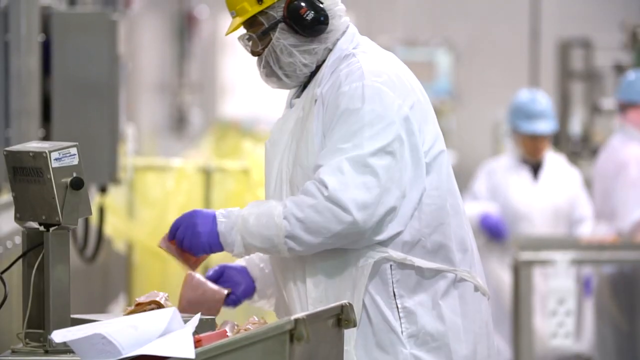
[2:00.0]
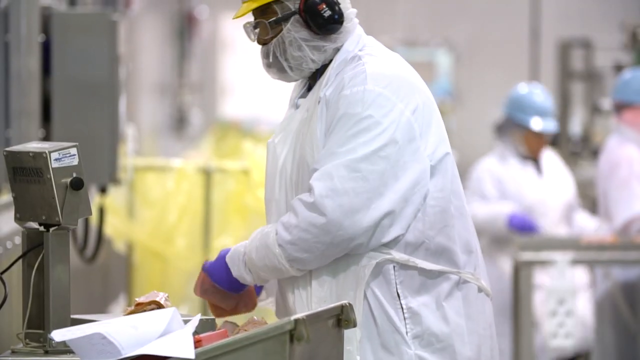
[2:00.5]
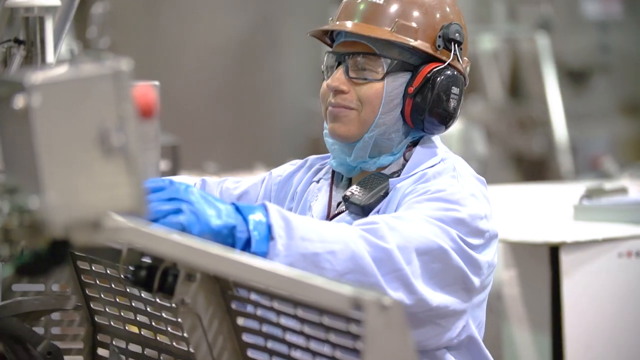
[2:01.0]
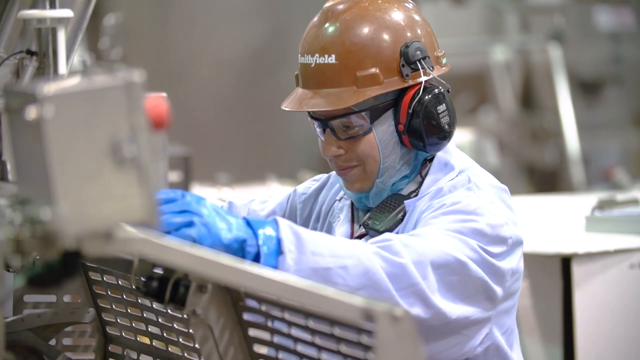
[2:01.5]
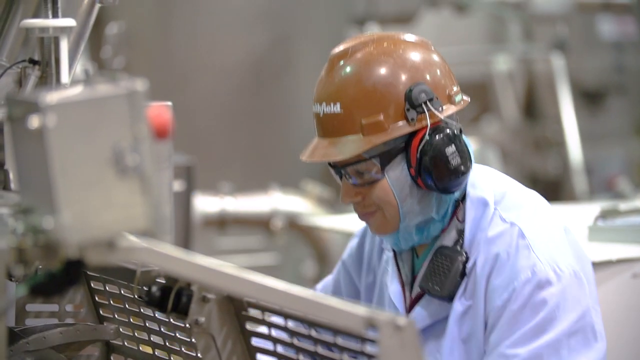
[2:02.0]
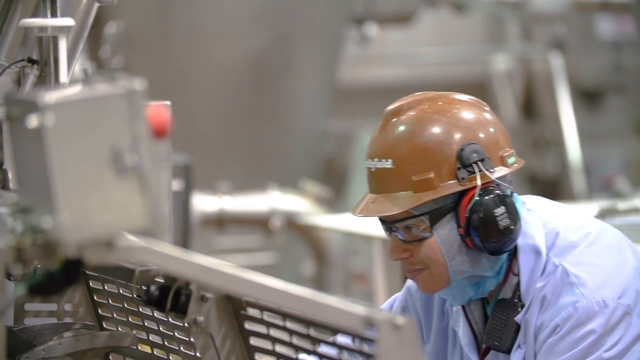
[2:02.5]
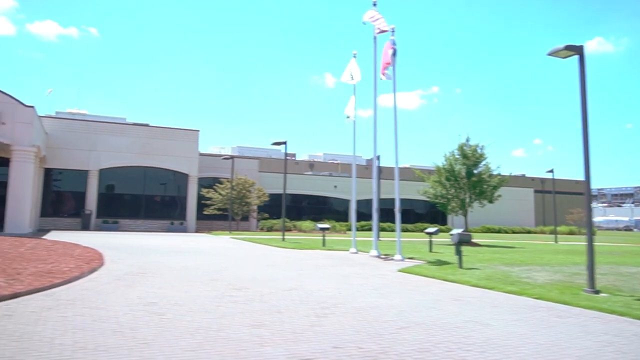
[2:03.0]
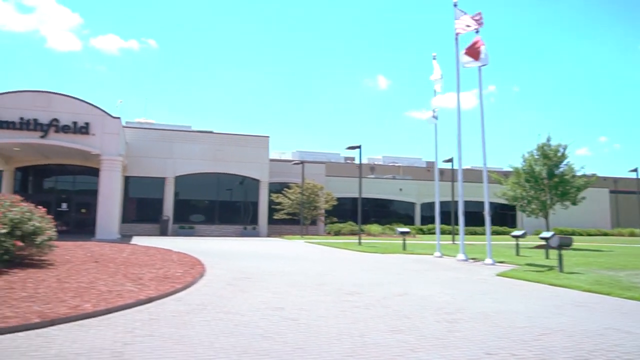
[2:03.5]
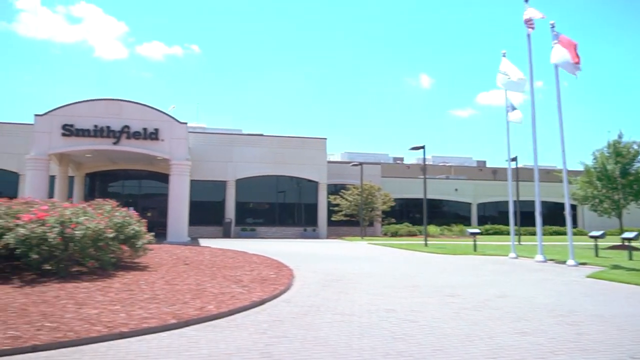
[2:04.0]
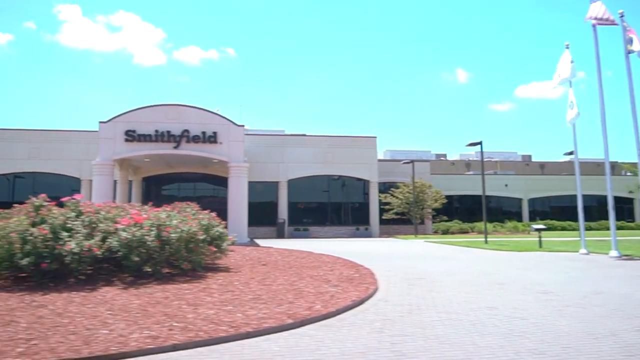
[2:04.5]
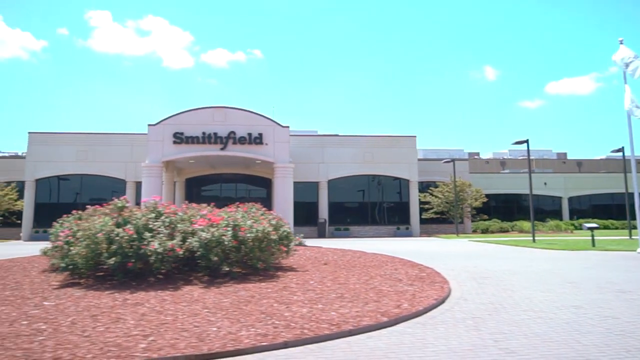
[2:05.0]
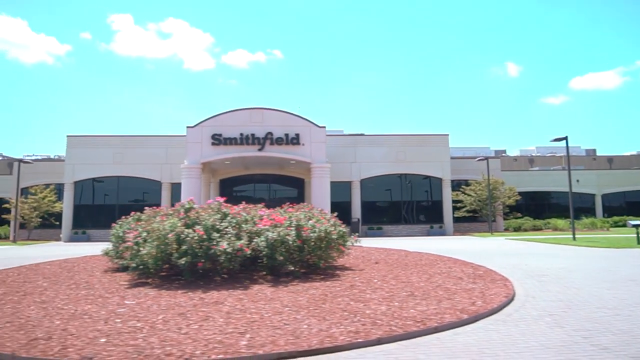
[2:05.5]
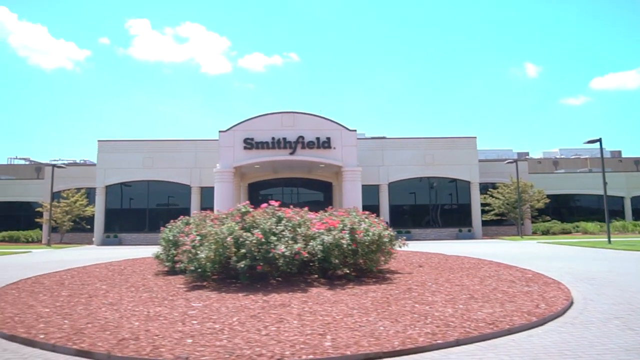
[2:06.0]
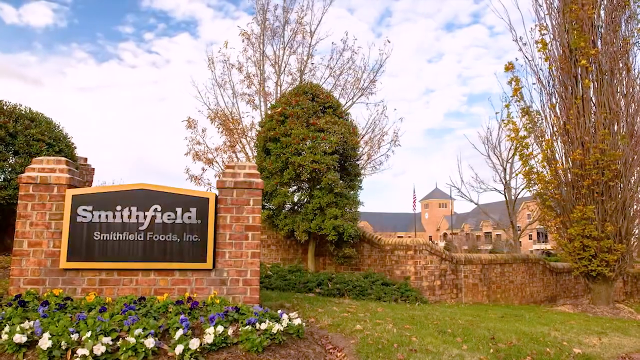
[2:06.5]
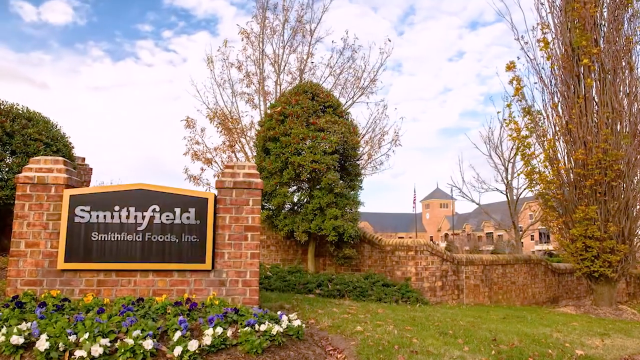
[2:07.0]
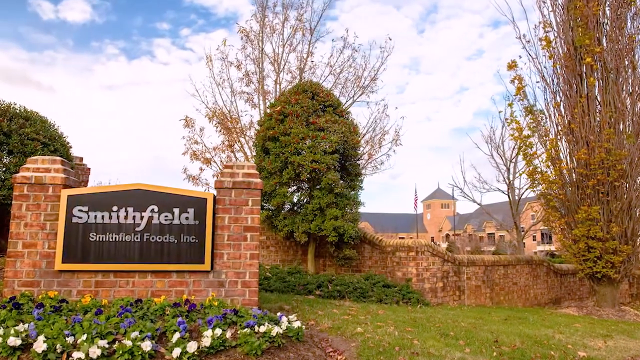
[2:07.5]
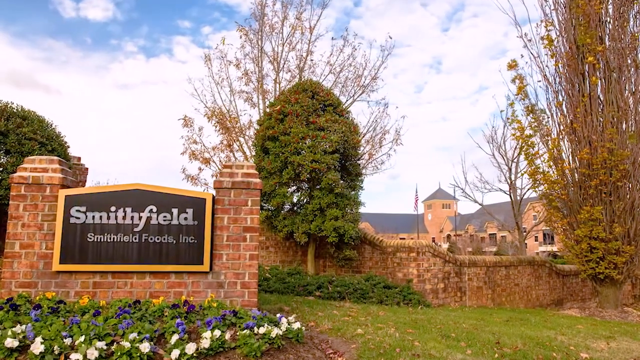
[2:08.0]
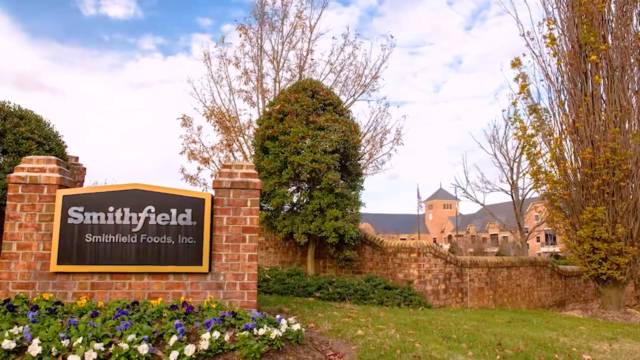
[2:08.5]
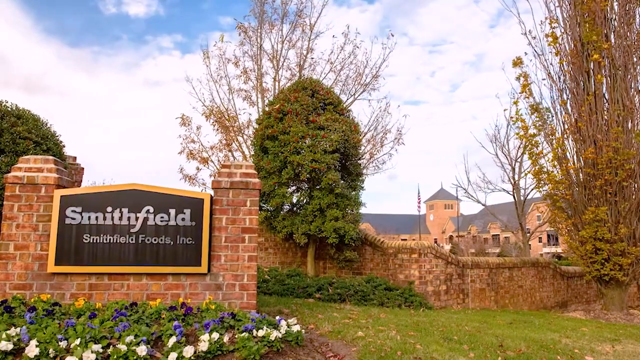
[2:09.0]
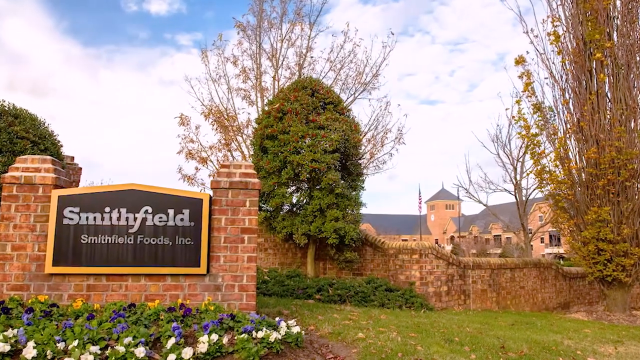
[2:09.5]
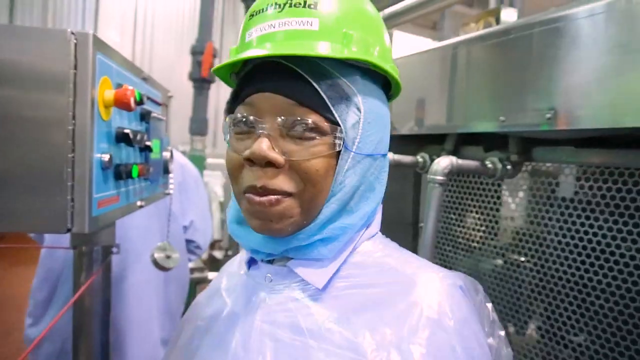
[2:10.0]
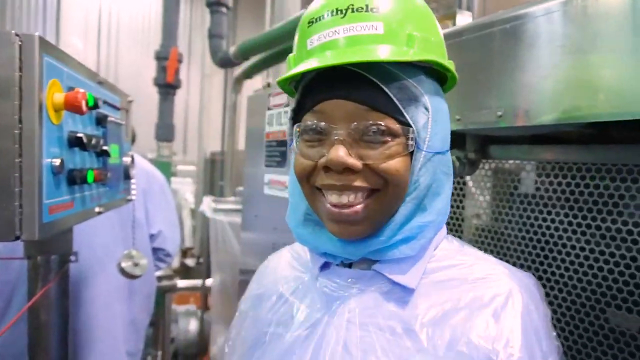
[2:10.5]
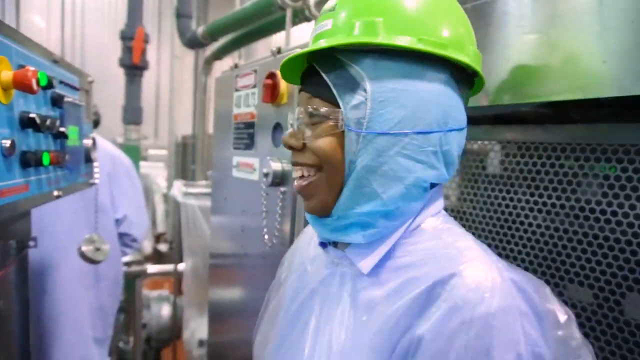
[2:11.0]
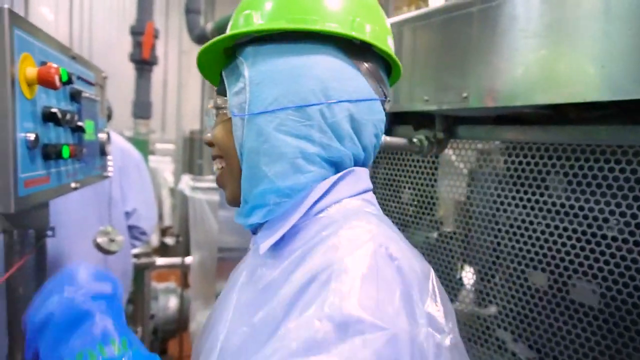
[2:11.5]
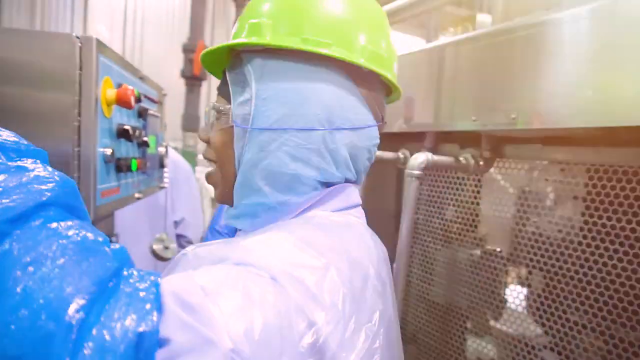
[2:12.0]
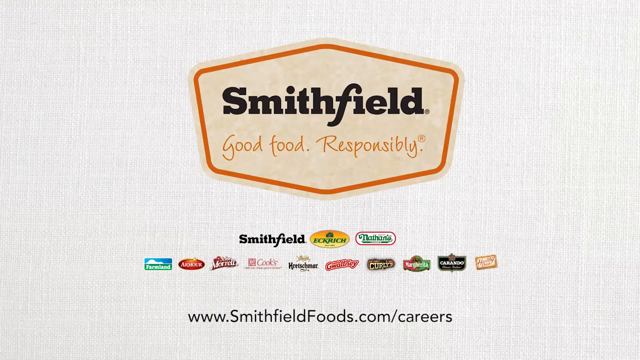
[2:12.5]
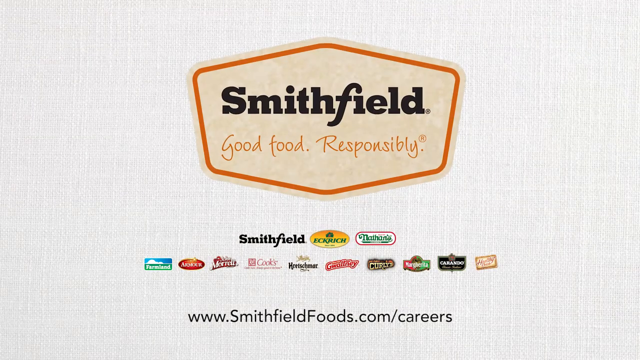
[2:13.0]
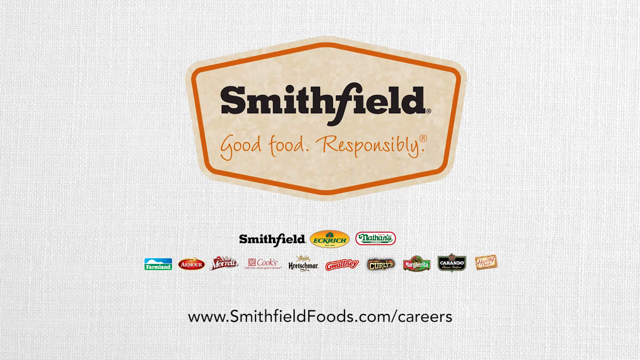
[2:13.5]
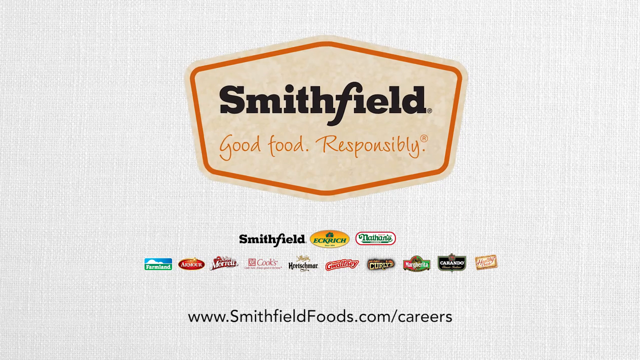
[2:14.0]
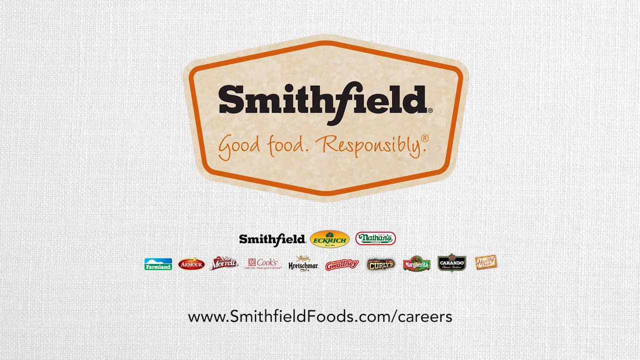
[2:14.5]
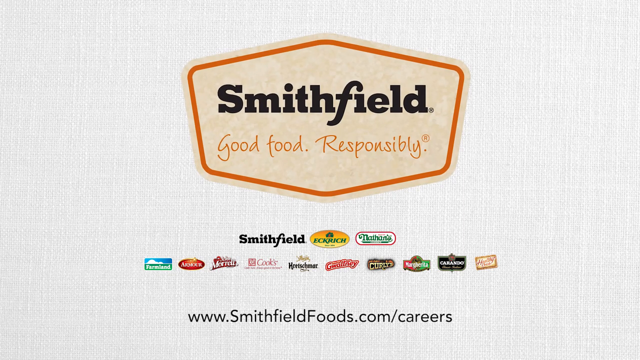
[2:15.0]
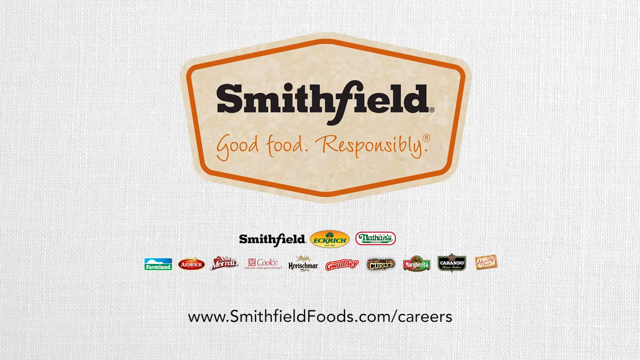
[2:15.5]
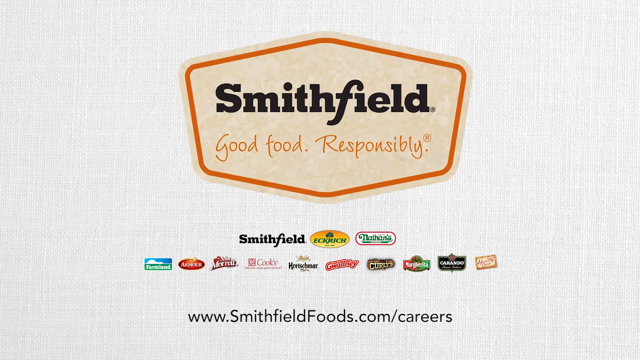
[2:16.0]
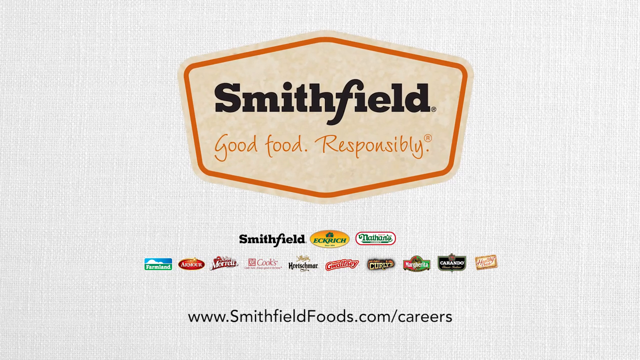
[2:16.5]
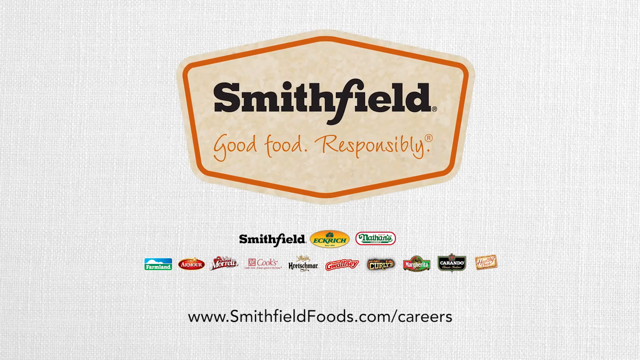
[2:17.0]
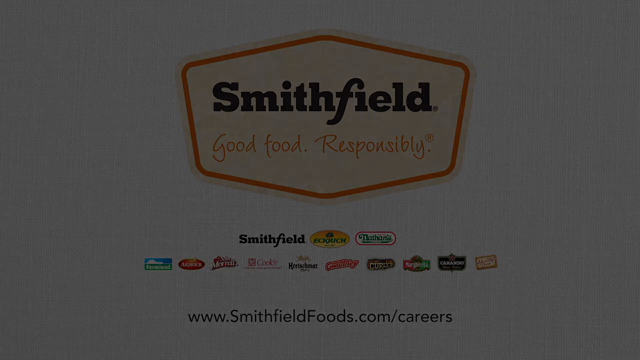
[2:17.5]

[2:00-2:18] Somebody weighs something out and deals with machinery, and in the next shot somebody looks at a large piece of machinery. A shot taken from a moving vehicle moves around the driveway of the Smithfield warehouse. The warehouse is very large, with very large windows that are rounded at the top and squared off at the bottom, and the Smithfield logo over the main doors. A circular driveway leads to the main door, with bushes in the roundabout section at the front. Further out, a wall has "Smithfield" on it and "Smithfield Food Inc." underneath. A picture shows somebody in the warehouse smiling, then the screen goes white with the Smithfield logo at the top, "Good food responsibly" underneath, and the various different people Smithfield works with below that.